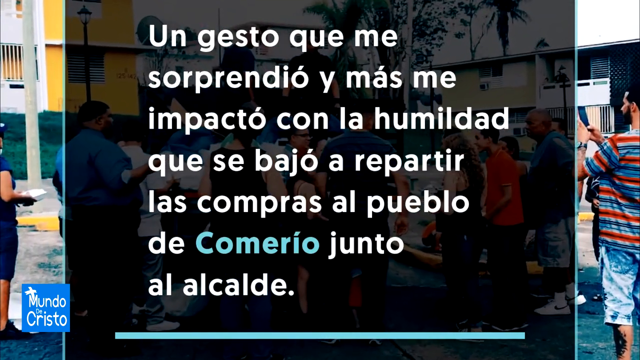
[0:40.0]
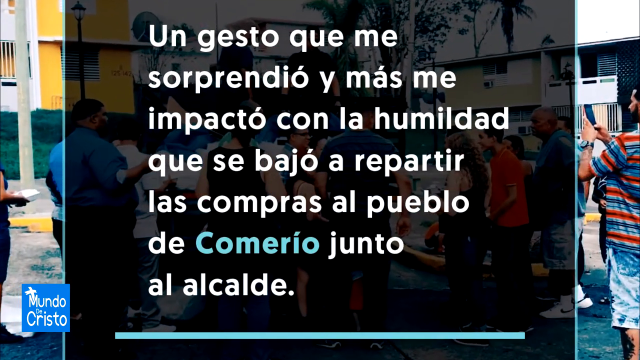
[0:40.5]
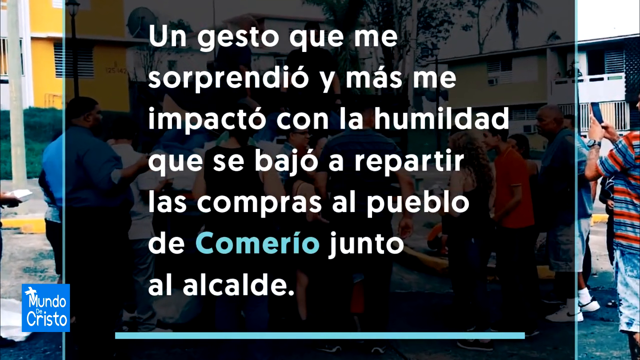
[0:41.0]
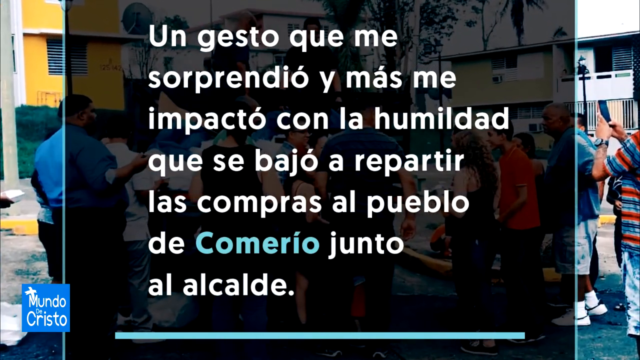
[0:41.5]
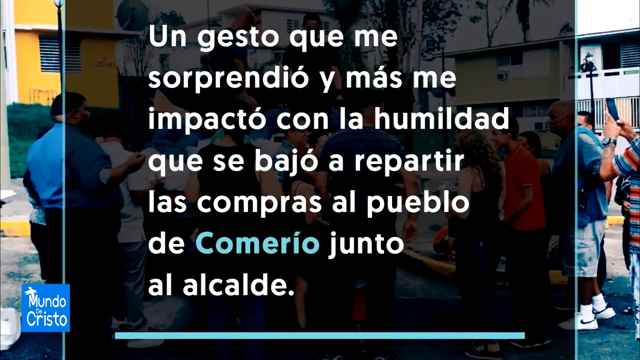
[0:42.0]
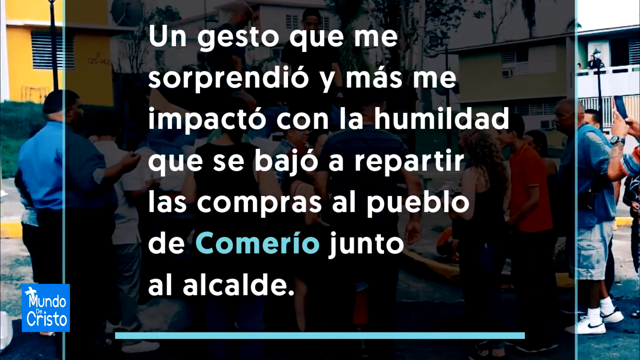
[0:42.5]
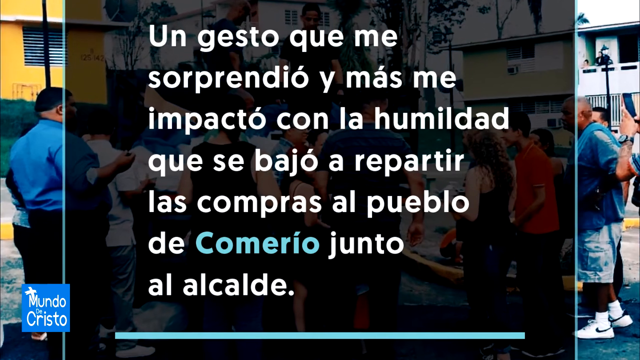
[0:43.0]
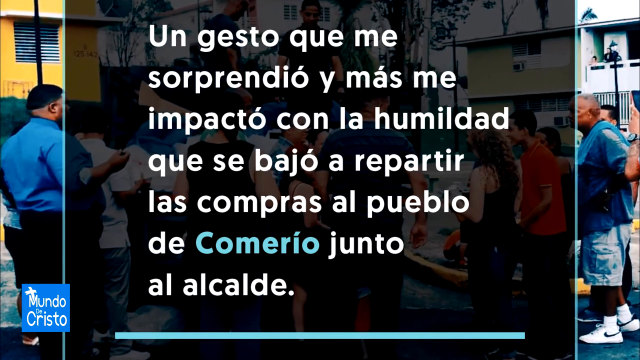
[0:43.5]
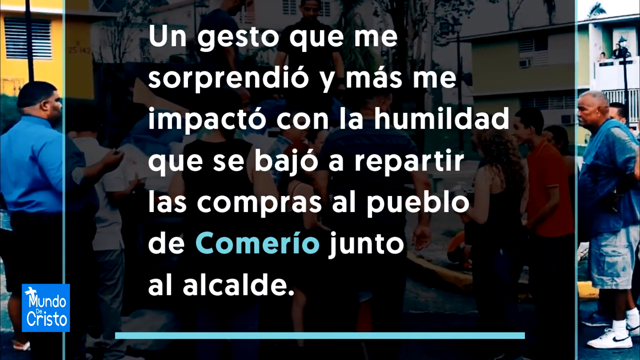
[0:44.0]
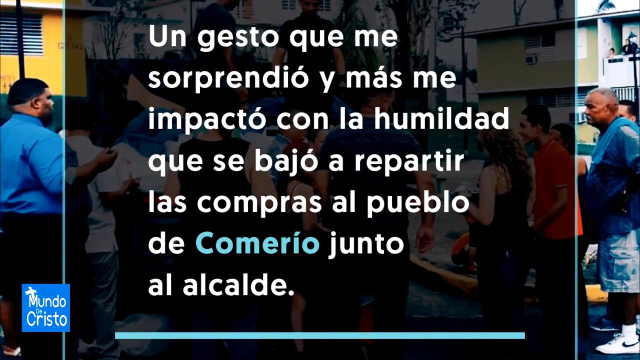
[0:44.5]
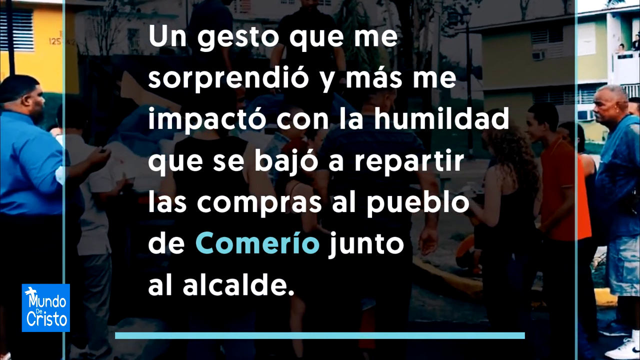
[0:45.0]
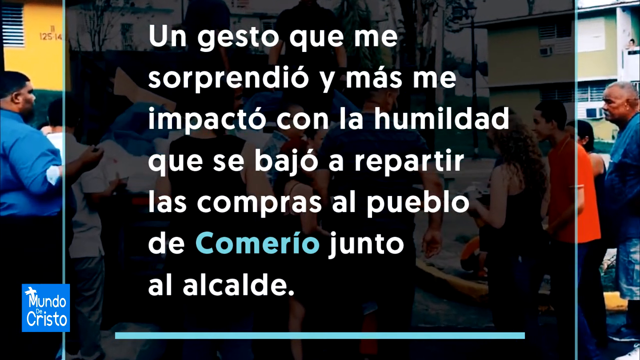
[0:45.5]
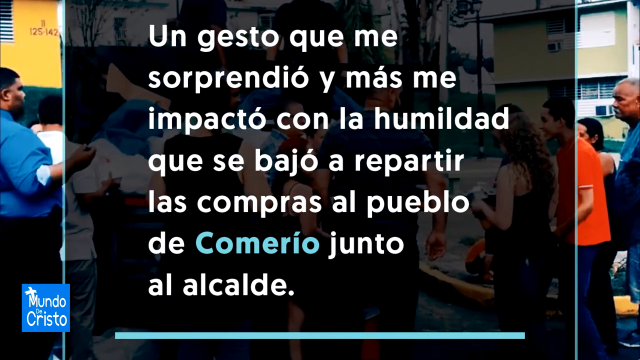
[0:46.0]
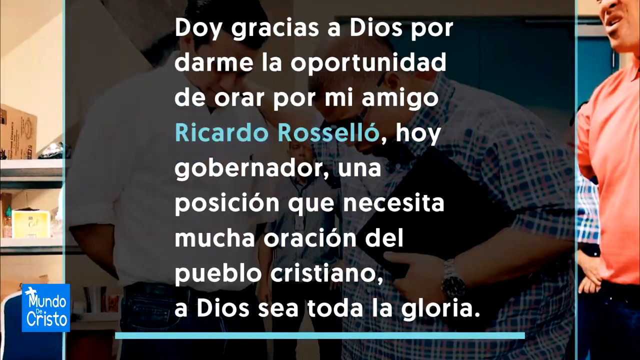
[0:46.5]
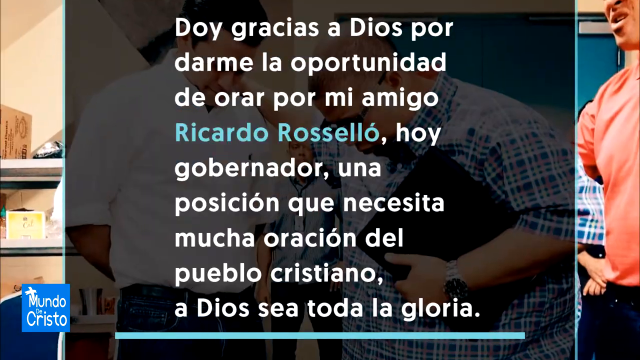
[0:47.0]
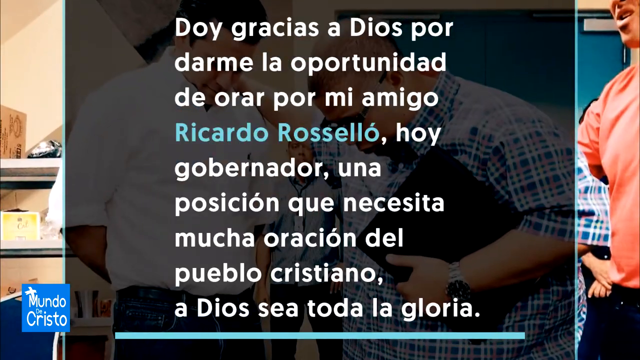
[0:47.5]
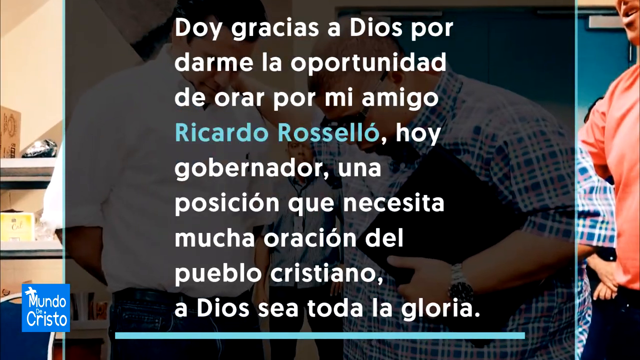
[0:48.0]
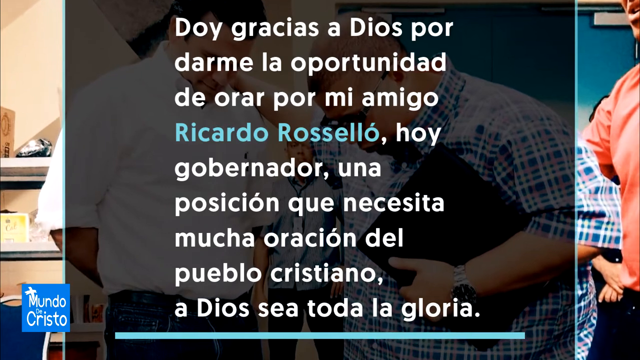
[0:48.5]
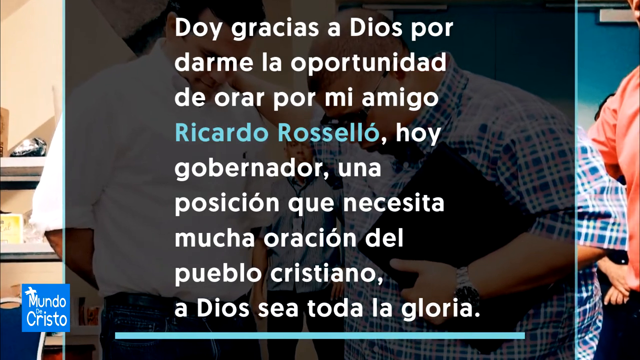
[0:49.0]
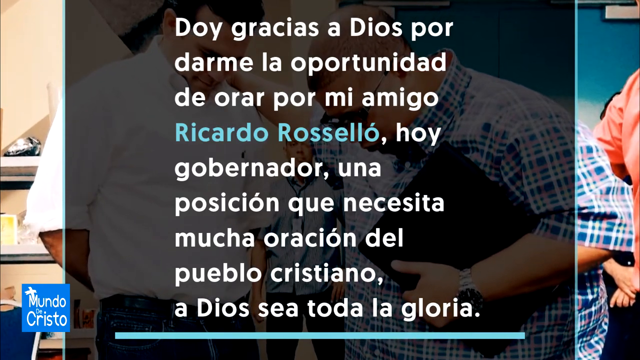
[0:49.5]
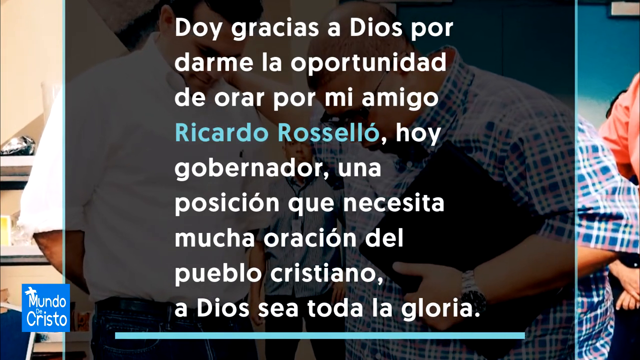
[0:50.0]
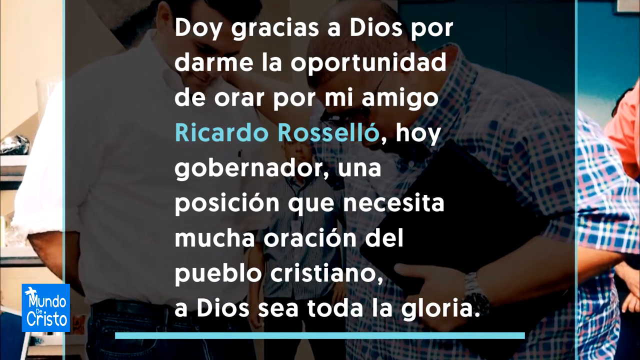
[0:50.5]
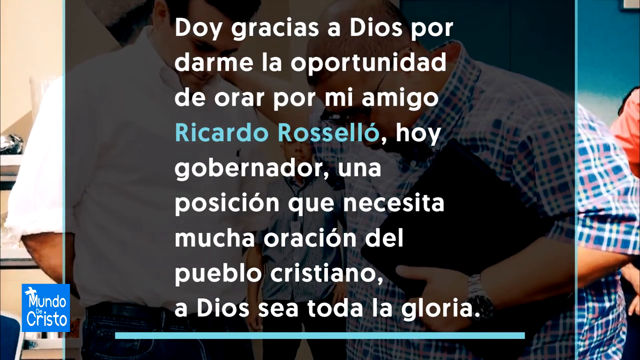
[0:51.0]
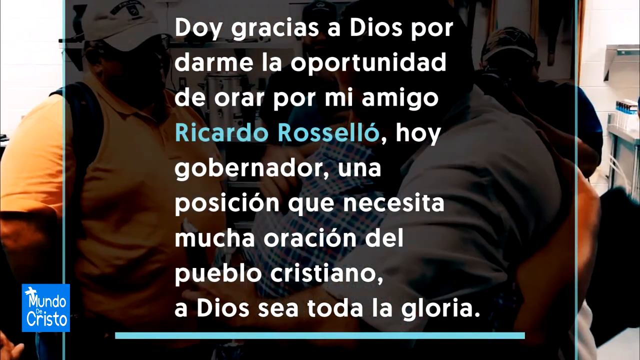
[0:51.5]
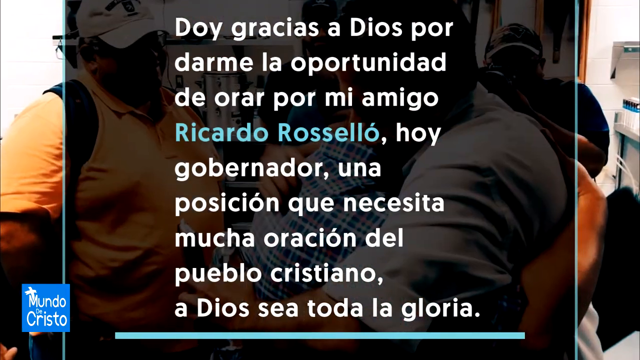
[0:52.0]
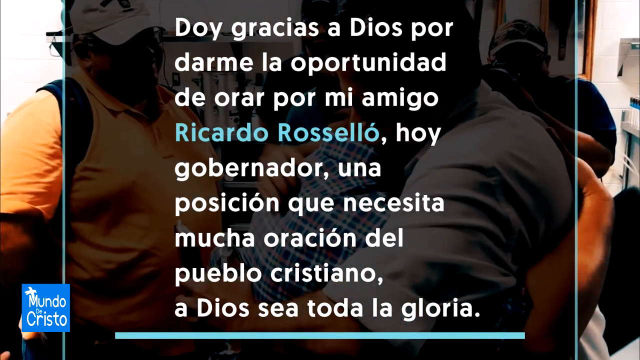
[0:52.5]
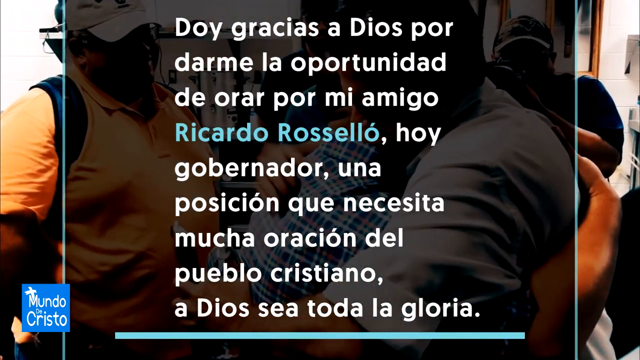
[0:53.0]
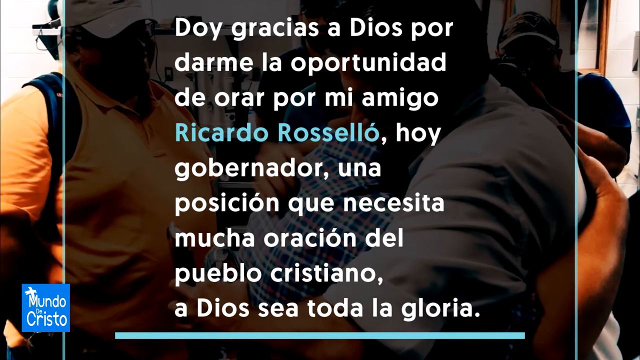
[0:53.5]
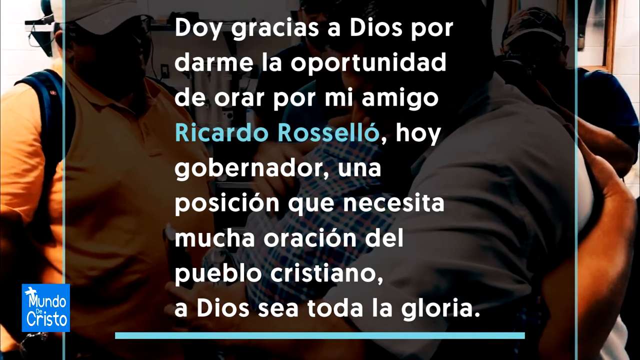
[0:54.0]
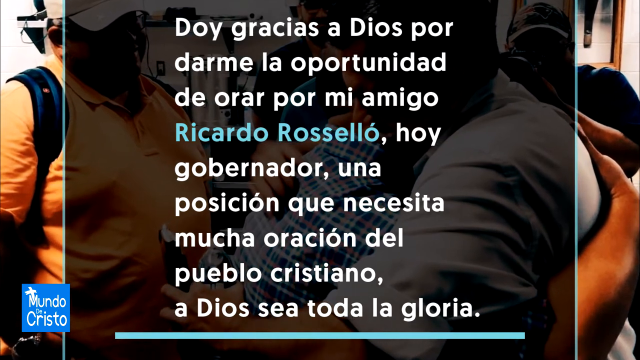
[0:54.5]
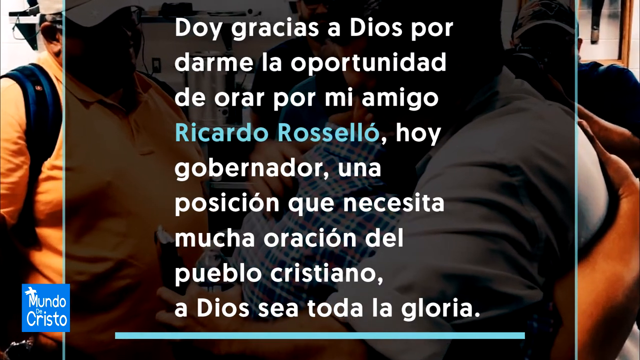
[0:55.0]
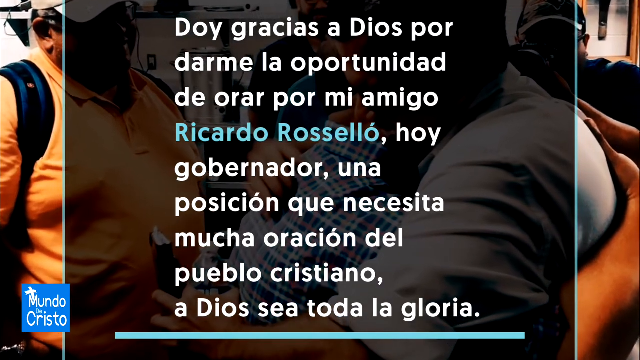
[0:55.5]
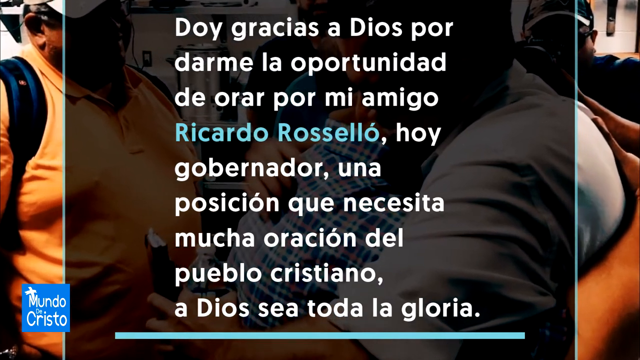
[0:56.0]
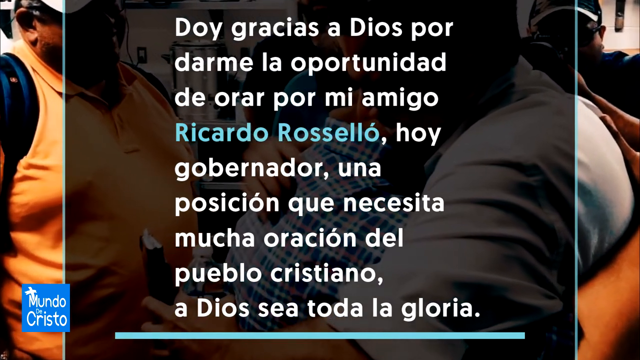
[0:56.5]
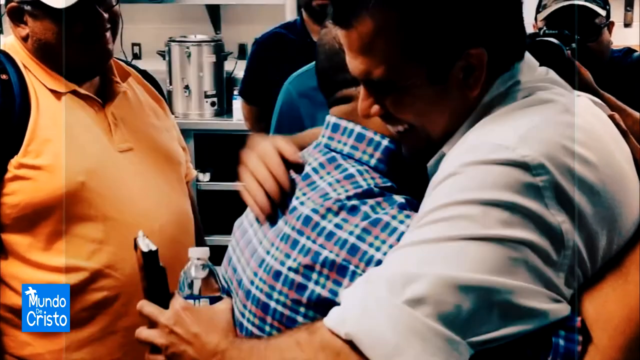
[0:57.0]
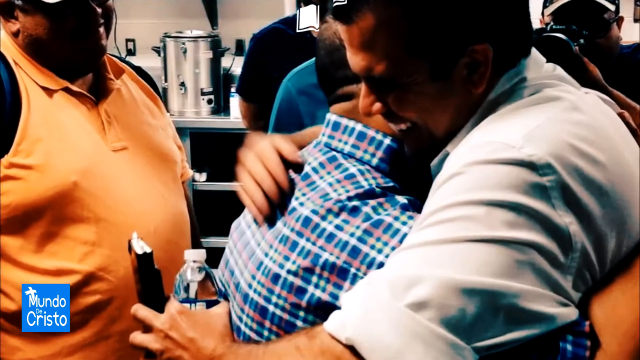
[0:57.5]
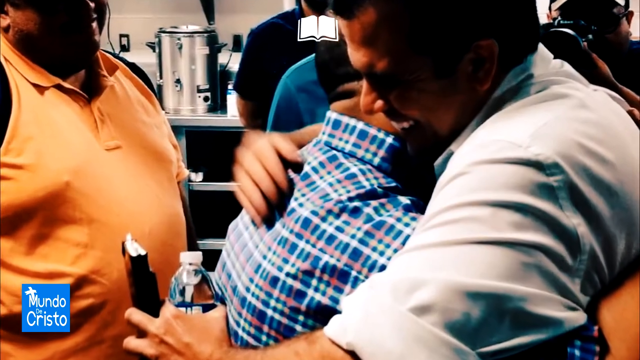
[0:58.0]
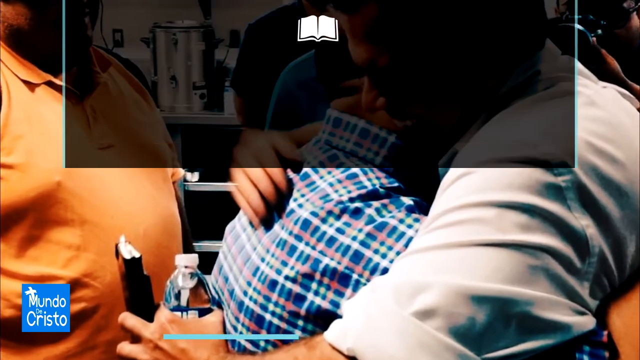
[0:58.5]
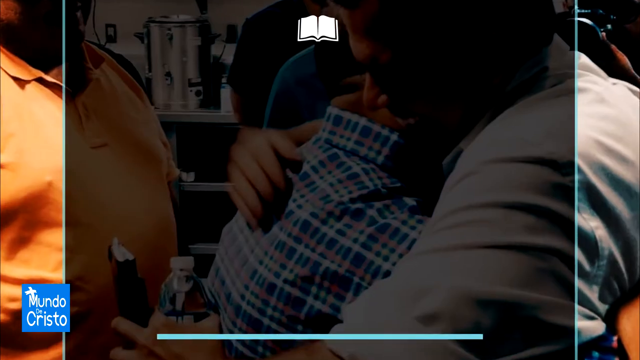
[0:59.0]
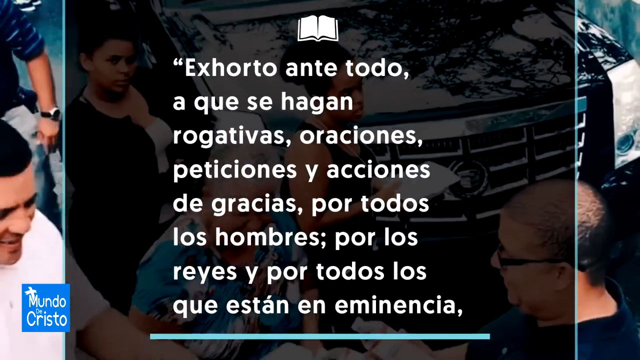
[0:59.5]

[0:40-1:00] A black screen pops up with white lettering that reads "un gesto que me sorprendió y más me impactó con la humildad que se bajó a repartir las compras al pueblo de Comerio junto al alcalde." Various people are standing in the background, with buildings behind them. The camera zooms in. The scene then changes to the same man with the glasses, the black book and the blue and white striped shirt praying over the man in the white collared shirt. White words pop up in the middle of the screen on a black background, reading "Doy gracias a Dios por darme la oportunidad de orar por mi amigo Ricardo Rossello, hoy gobernador una posicion que necesita mucha oracion del pueblo cristiano, a Dios se toda la gloria." The camera then zooms in and shows another scene with more people in the background wearing hats and embracing.